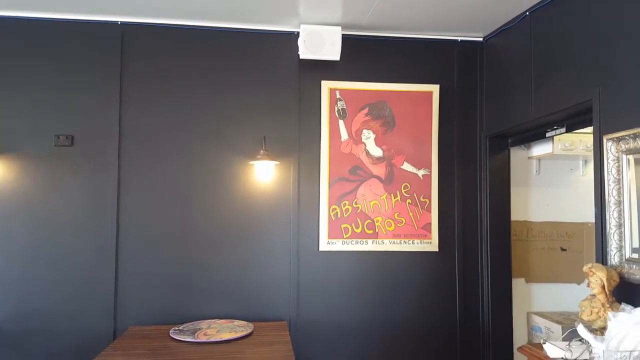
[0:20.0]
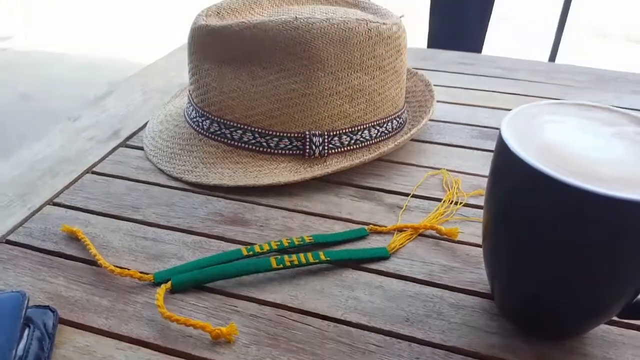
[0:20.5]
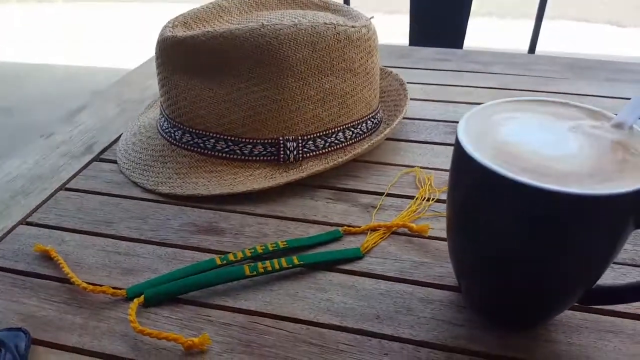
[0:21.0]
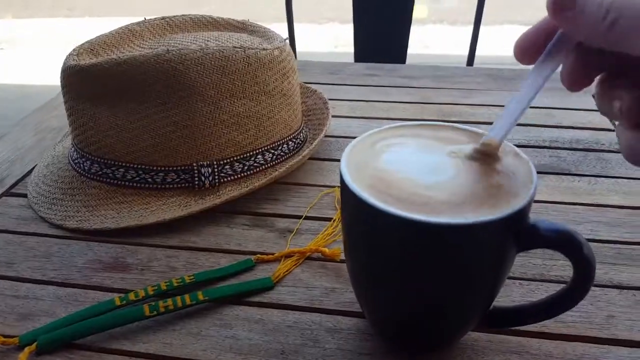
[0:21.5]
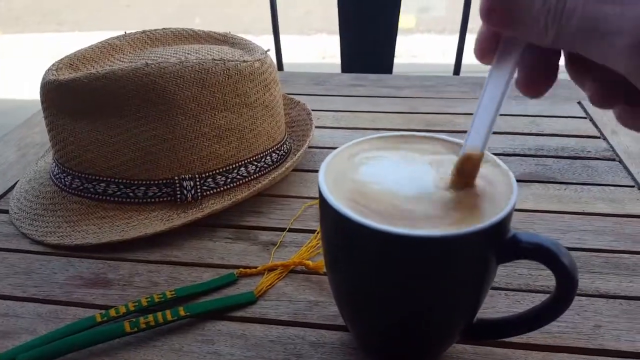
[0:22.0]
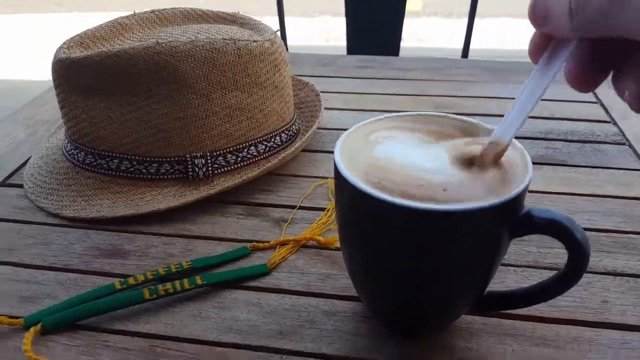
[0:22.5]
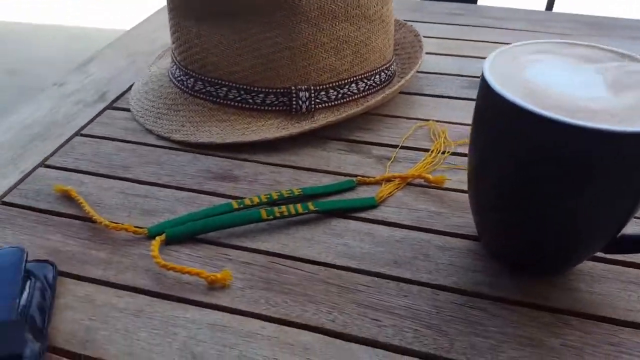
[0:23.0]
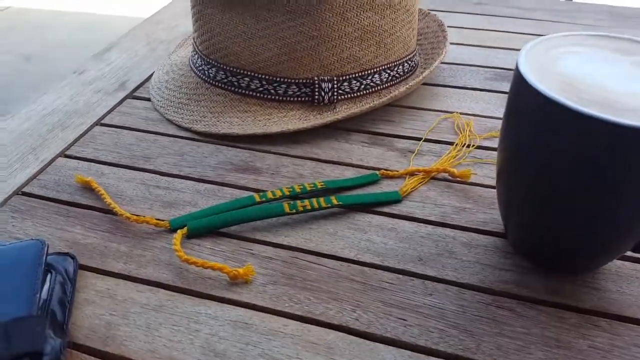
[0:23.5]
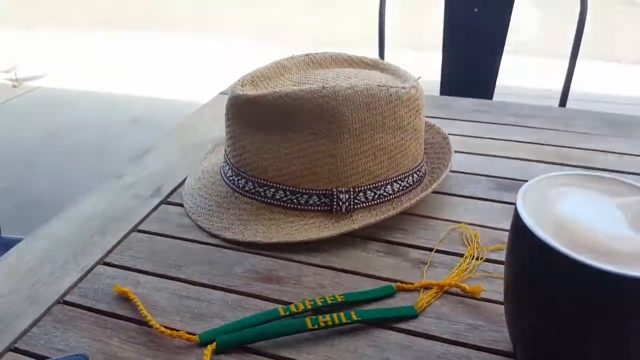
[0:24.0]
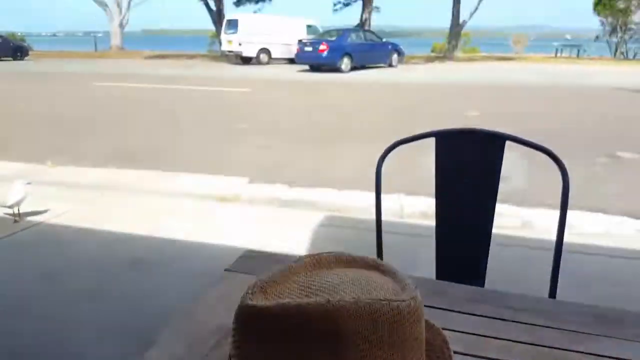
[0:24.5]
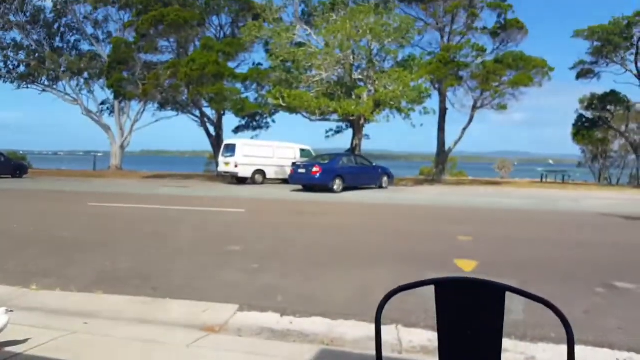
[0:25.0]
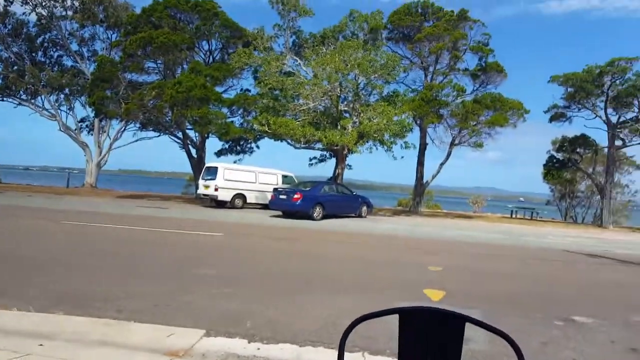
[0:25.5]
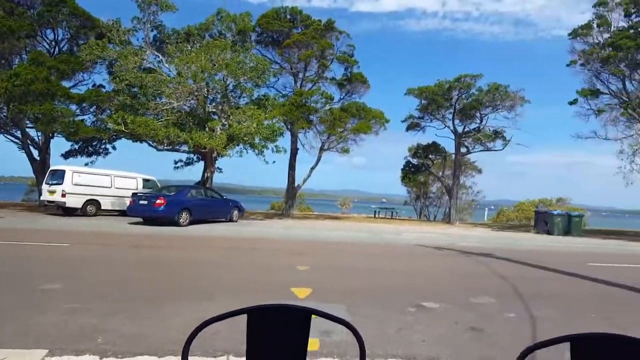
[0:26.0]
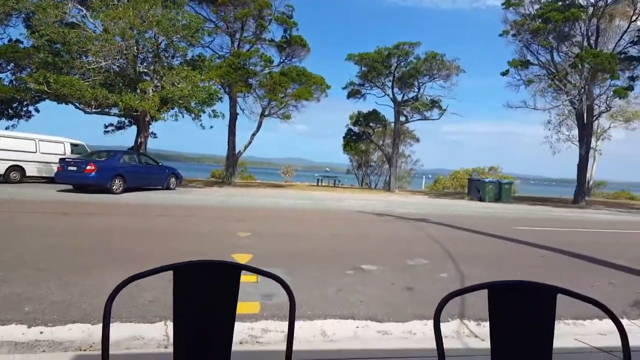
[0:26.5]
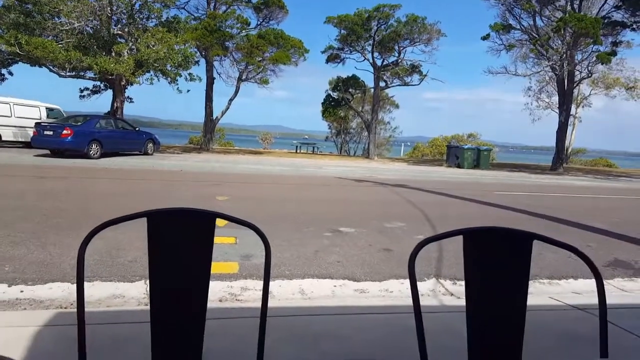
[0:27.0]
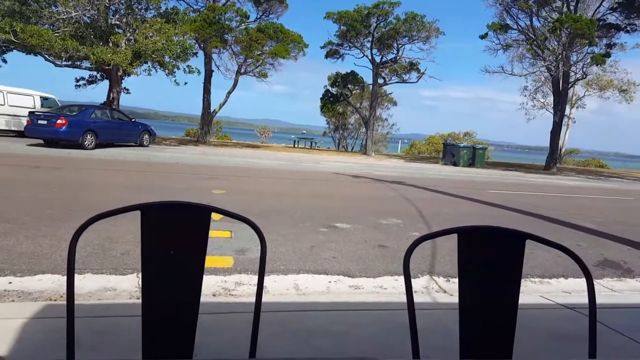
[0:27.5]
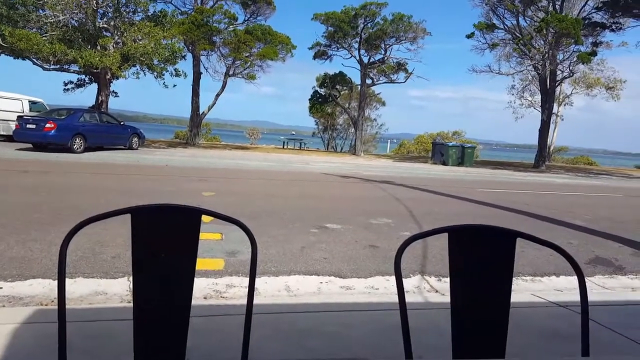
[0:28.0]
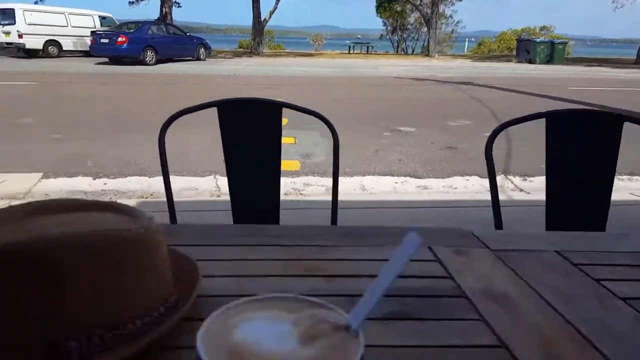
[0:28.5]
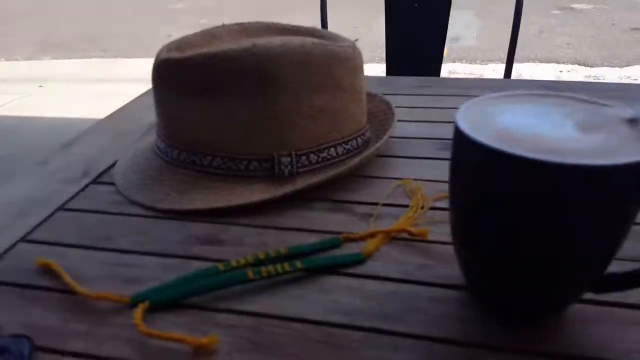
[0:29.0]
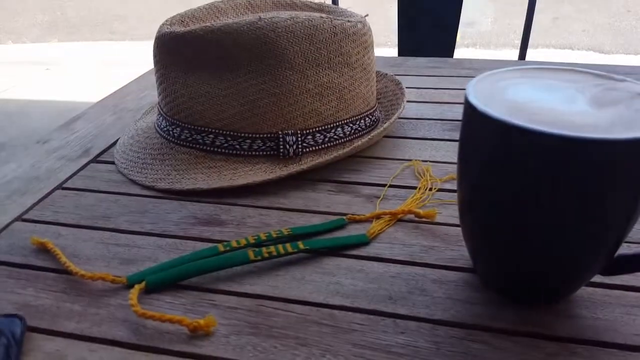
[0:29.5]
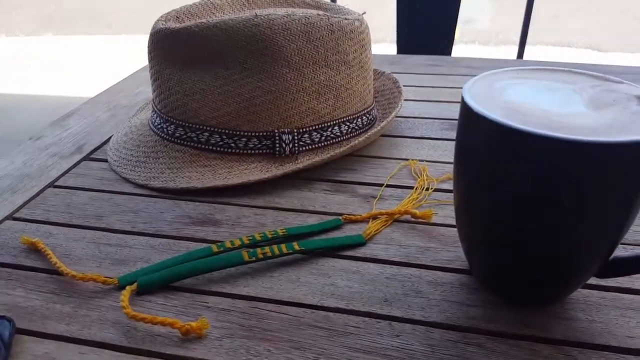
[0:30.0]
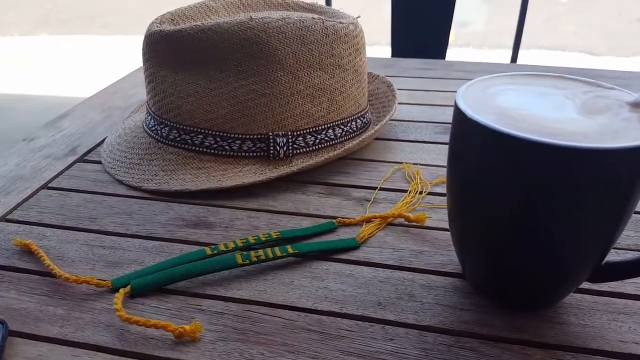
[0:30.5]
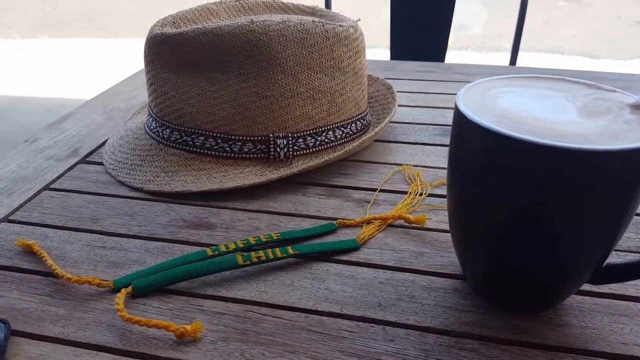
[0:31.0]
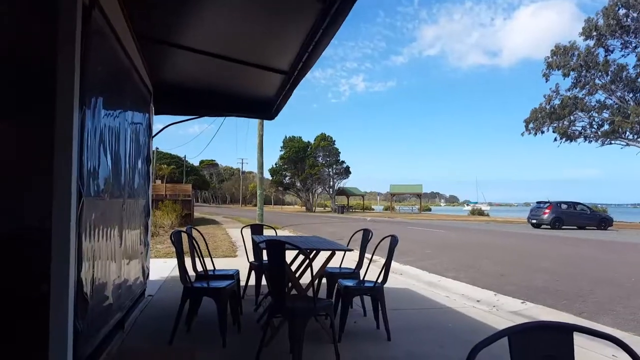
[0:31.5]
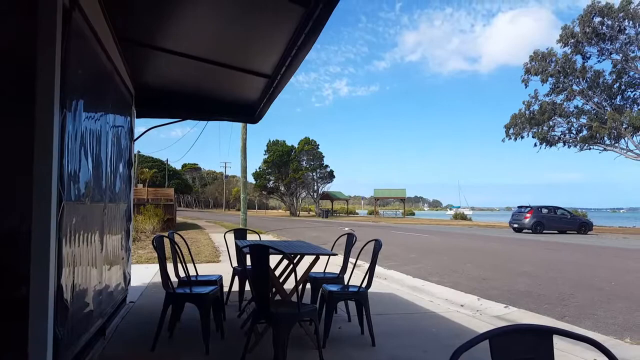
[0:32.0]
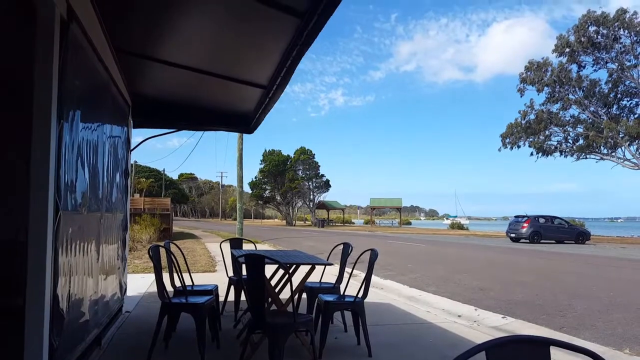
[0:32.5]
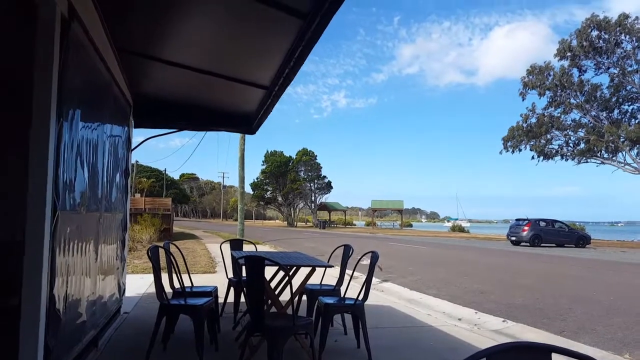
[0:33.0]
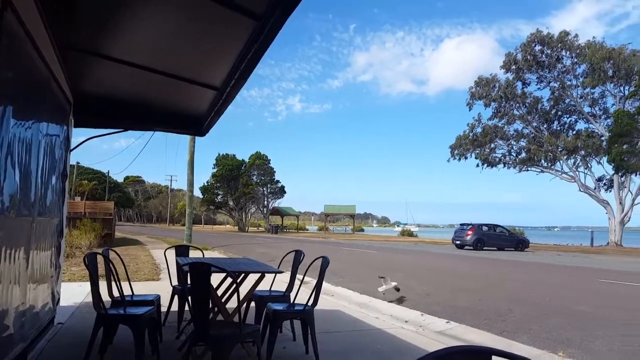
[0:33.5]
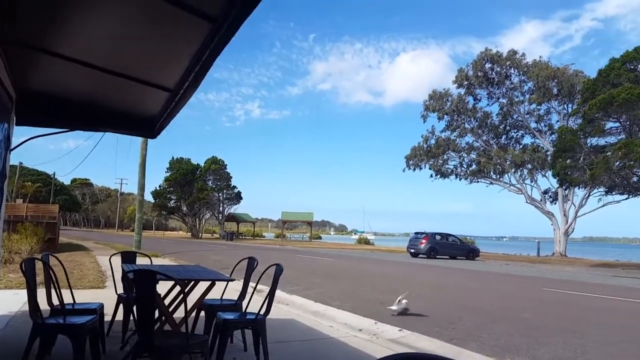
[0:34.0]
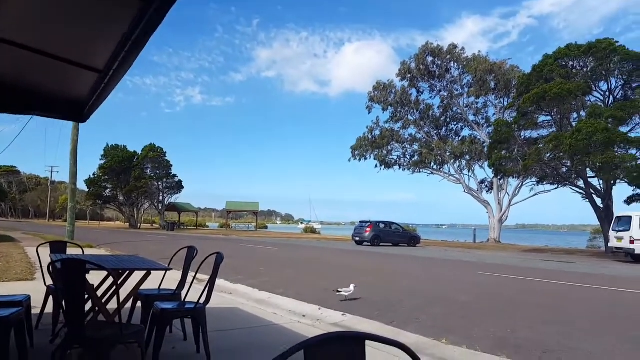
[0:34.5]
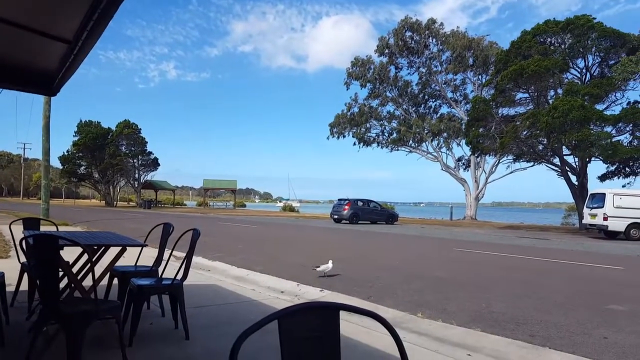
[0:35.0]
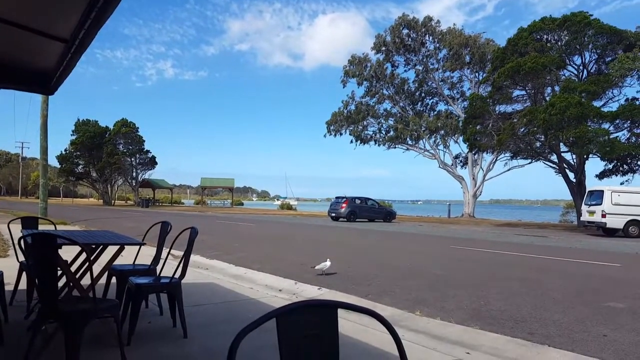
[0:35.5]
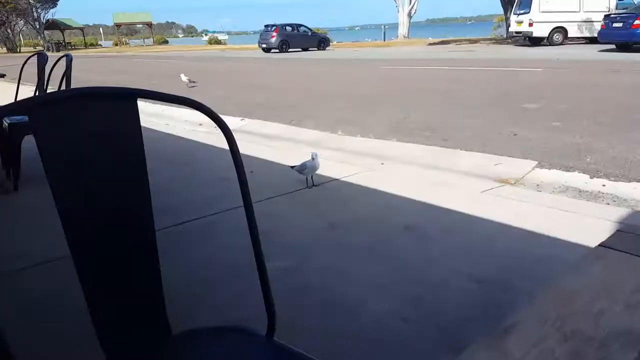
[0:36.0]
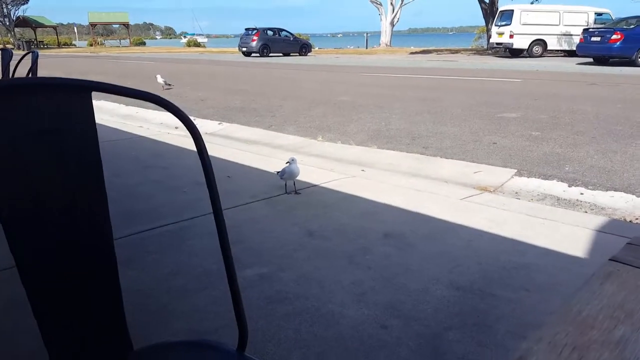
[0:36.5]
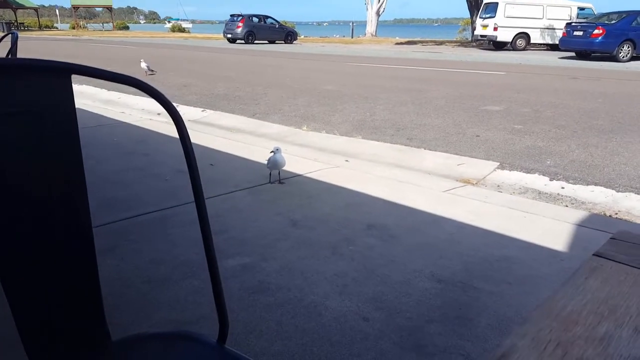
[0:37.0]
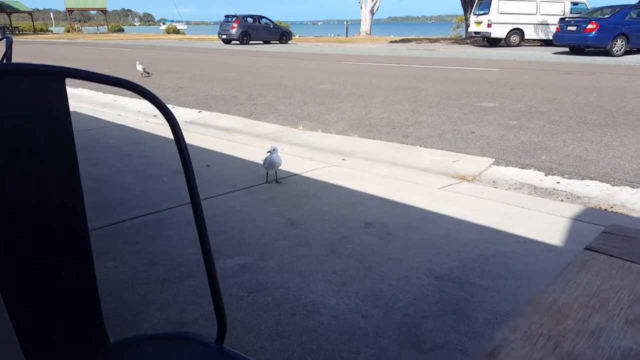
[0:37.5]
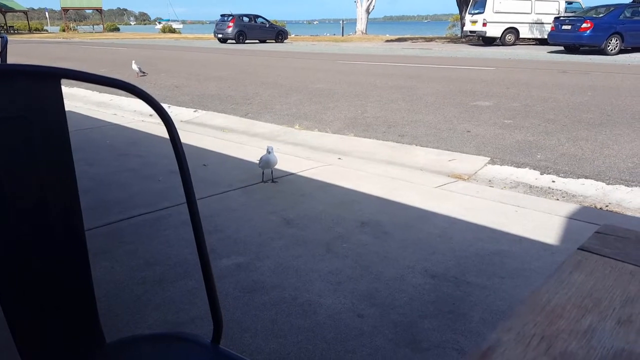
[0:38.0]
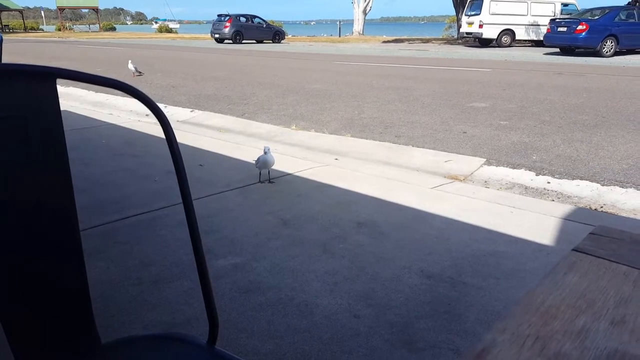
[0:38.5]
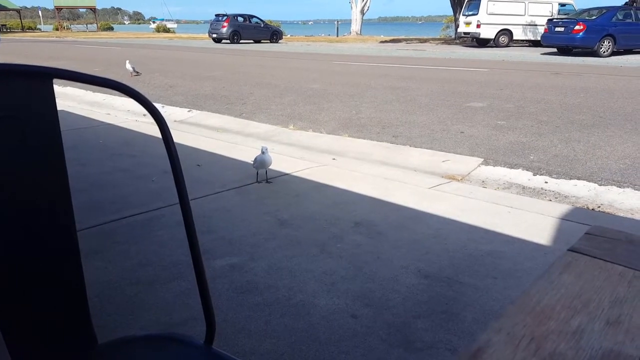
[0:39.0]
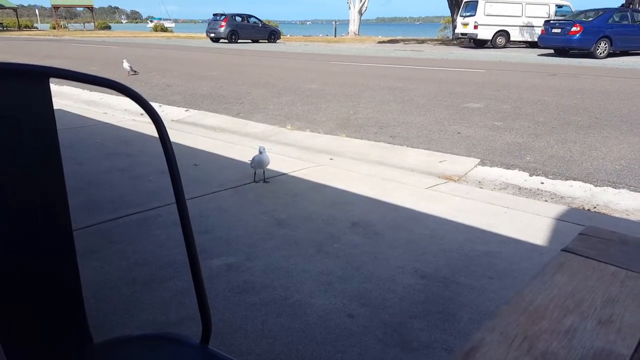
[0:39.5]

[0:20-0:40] From a first-person perspective, someone is sitting at what looks like an outside table. A brown top hat is on the table, along with what looks like a green tassel with yellow tassels at the end and yellow text reading "coffee and chill". At the bottom right is a coffee cup with foam that looks like a cappuccino, and a right hand stirs it with a little spoon. The camera pans up to show a parking lot, with trees in the background and a lake past the trees. A blue car and a white van are parked in front. The camera pans to the right a bit, showing green and blue trash cans and more trees. It goes back down to the green "coffee and chill" tassels with the yellow text, then moves directly to the left, showing another table on the left. The person seems to be sitting under a cover. Two seagulls swoop down, and one seagull looks toward the camera.